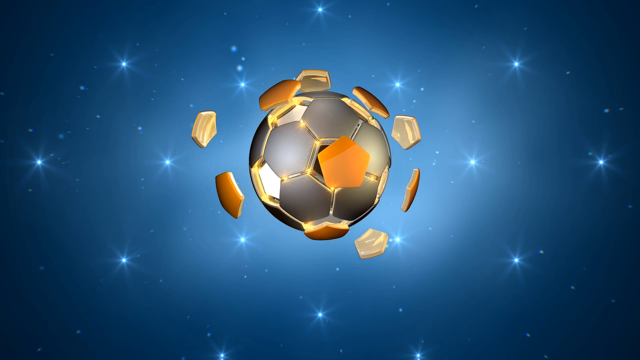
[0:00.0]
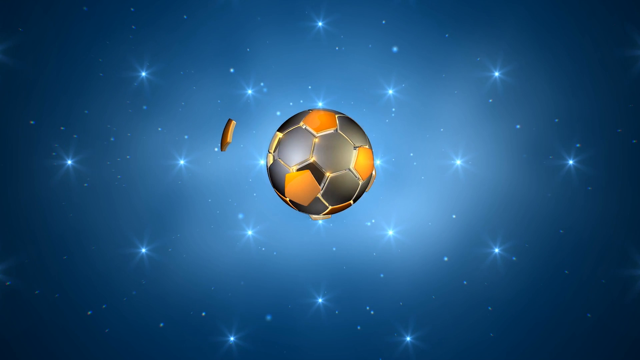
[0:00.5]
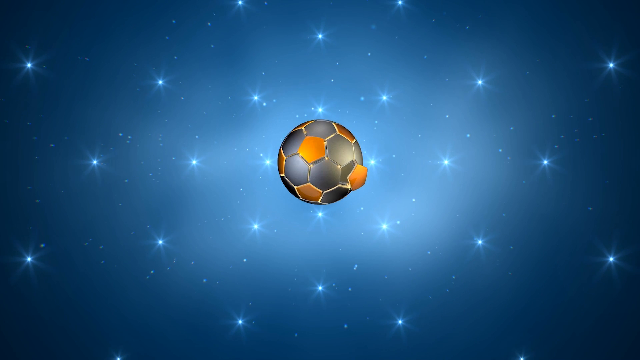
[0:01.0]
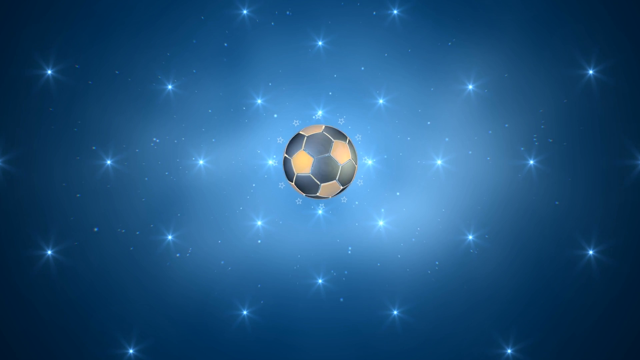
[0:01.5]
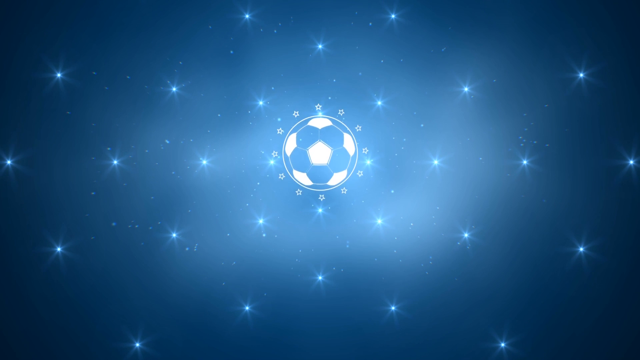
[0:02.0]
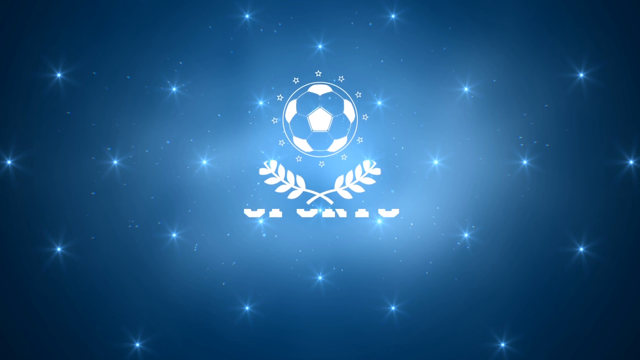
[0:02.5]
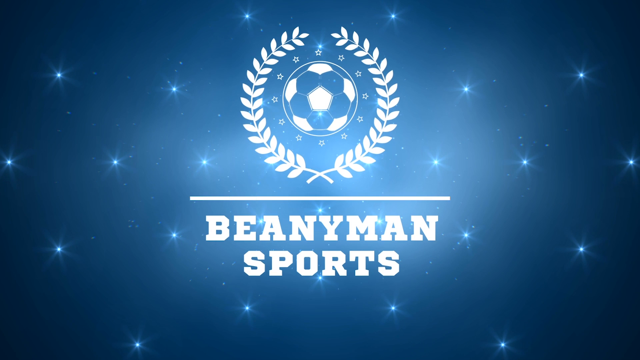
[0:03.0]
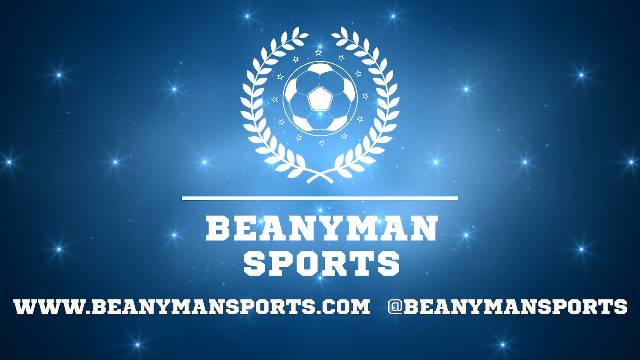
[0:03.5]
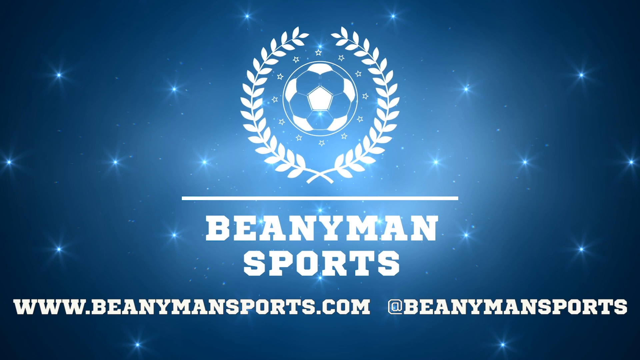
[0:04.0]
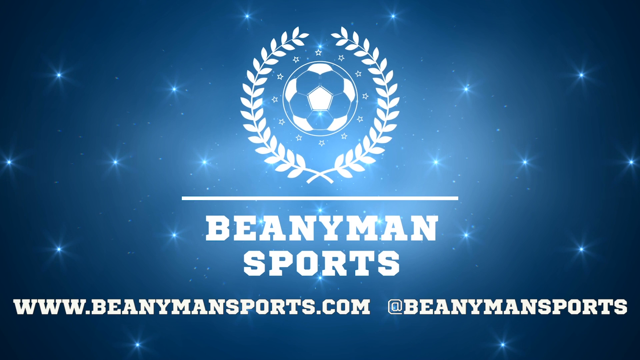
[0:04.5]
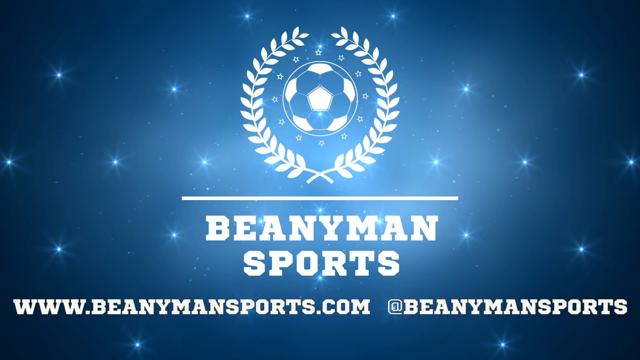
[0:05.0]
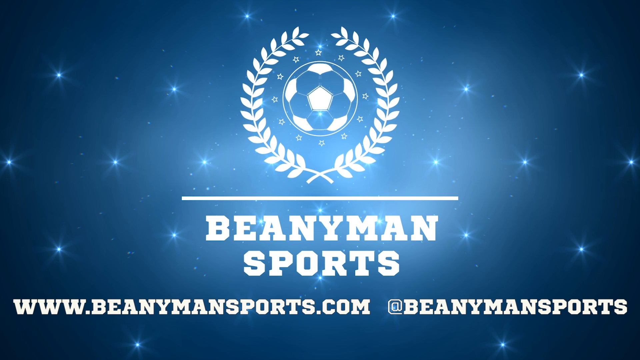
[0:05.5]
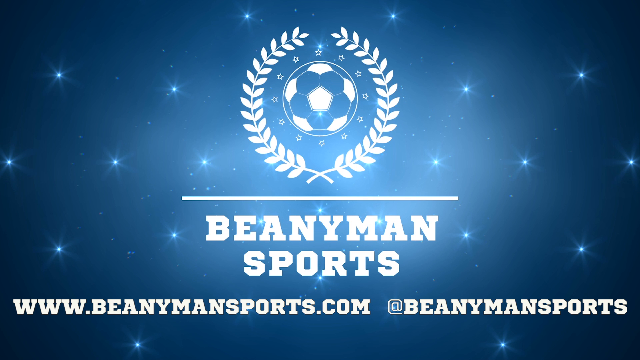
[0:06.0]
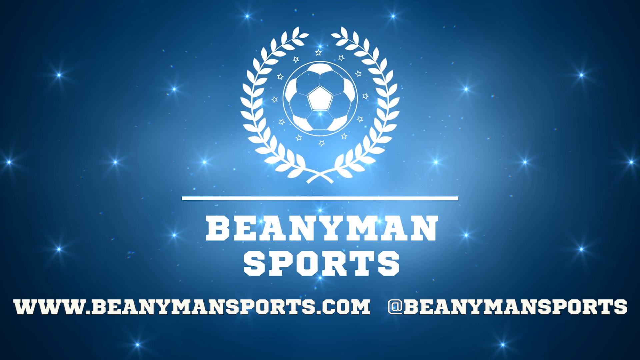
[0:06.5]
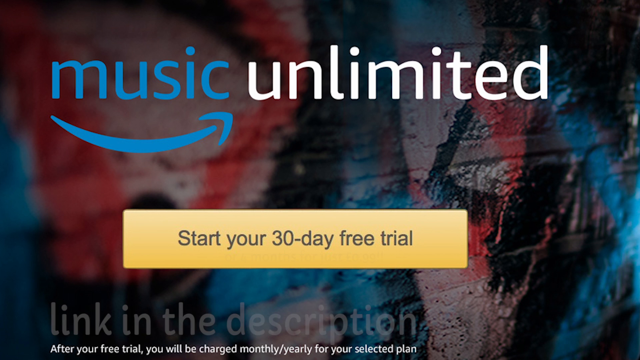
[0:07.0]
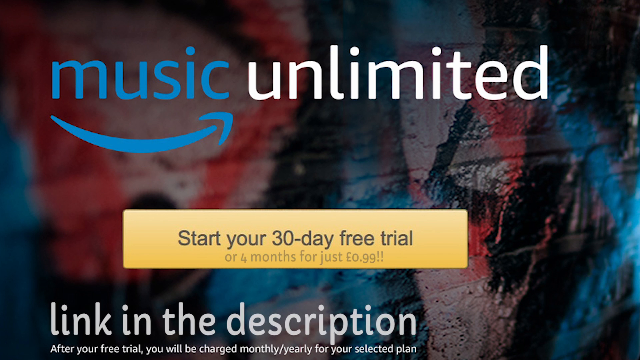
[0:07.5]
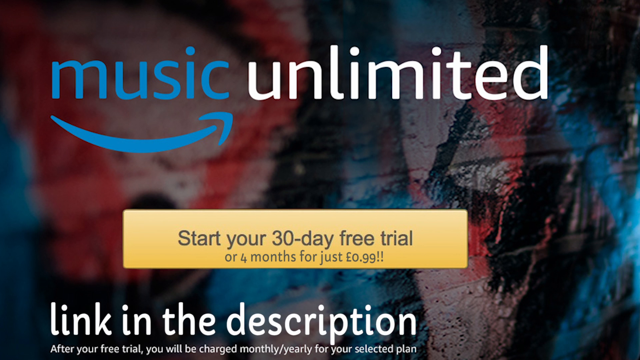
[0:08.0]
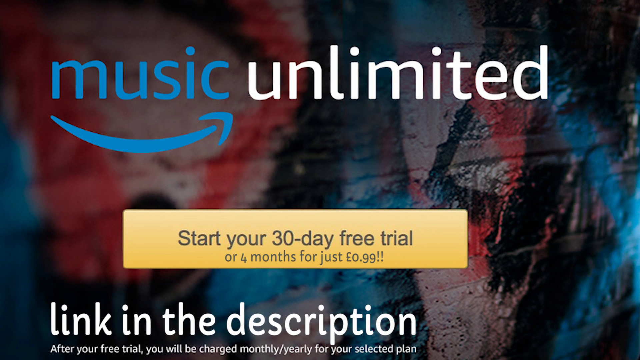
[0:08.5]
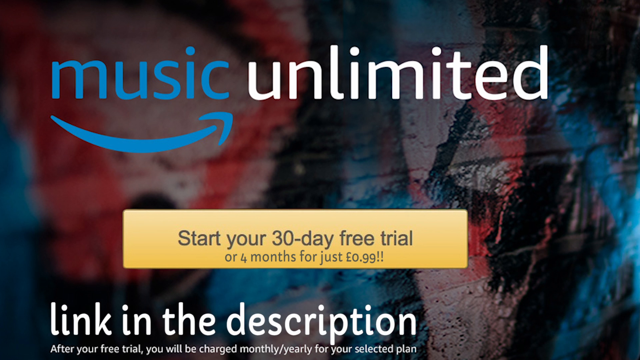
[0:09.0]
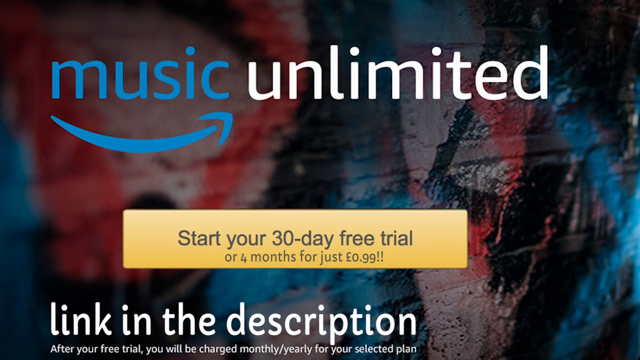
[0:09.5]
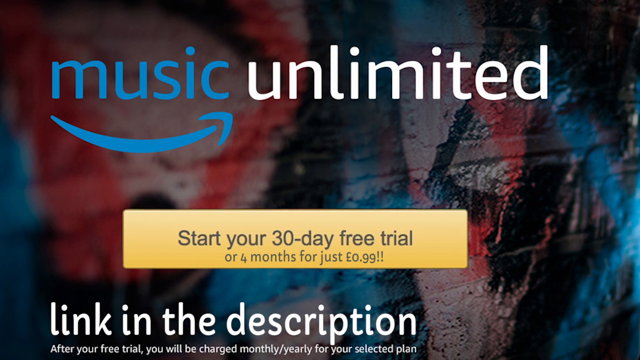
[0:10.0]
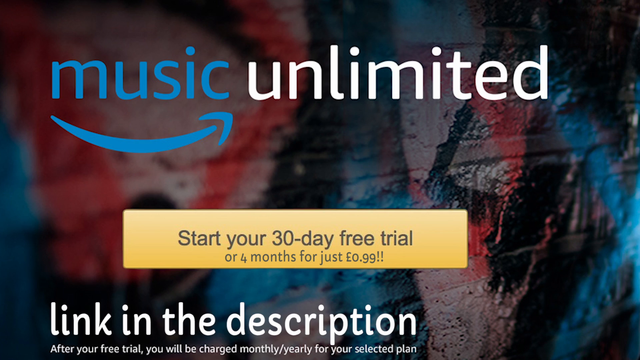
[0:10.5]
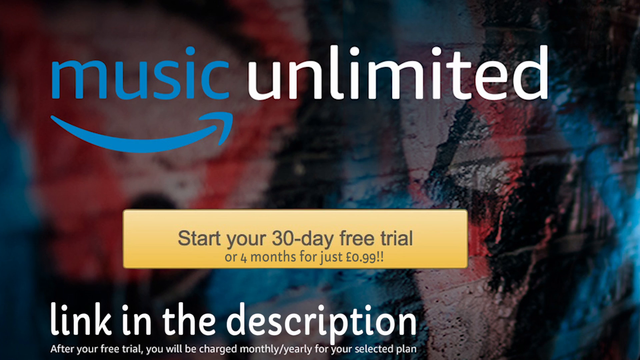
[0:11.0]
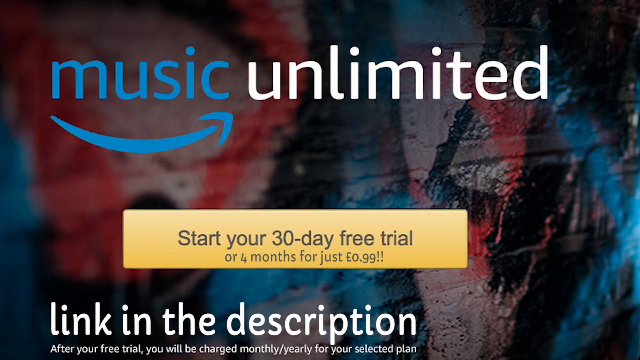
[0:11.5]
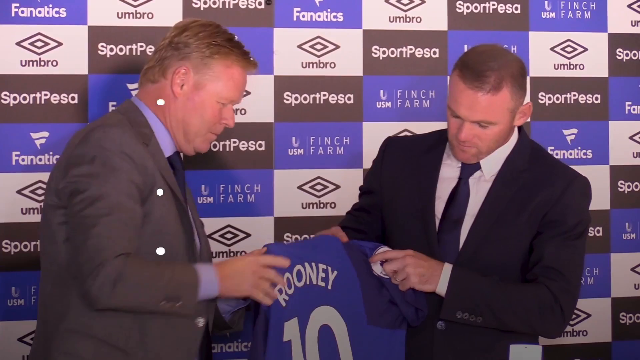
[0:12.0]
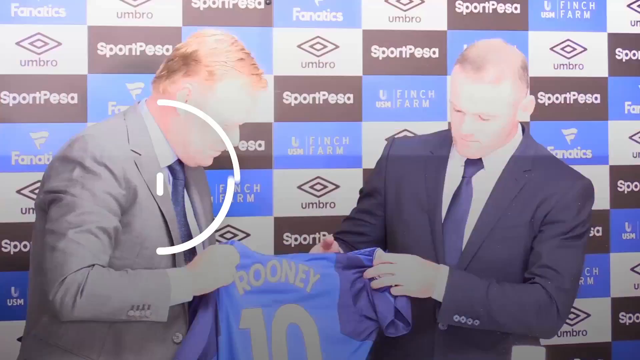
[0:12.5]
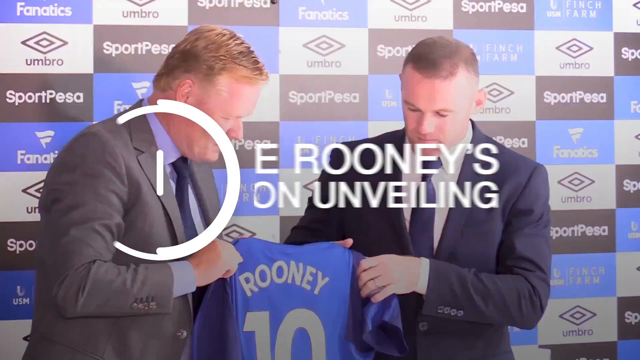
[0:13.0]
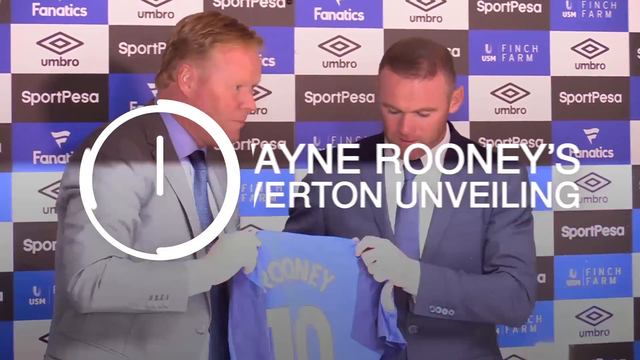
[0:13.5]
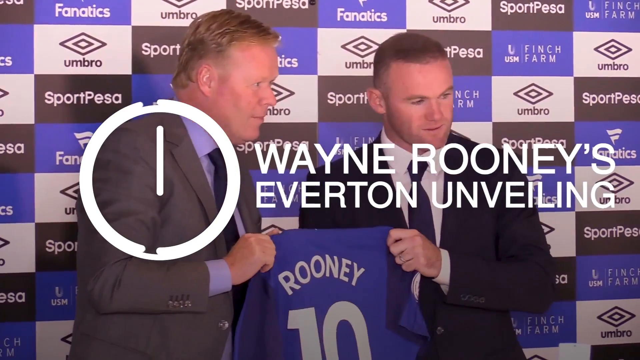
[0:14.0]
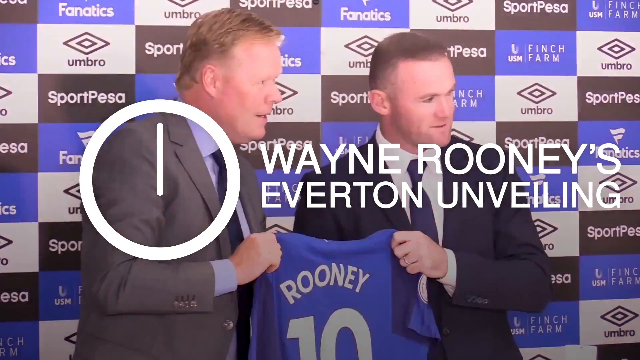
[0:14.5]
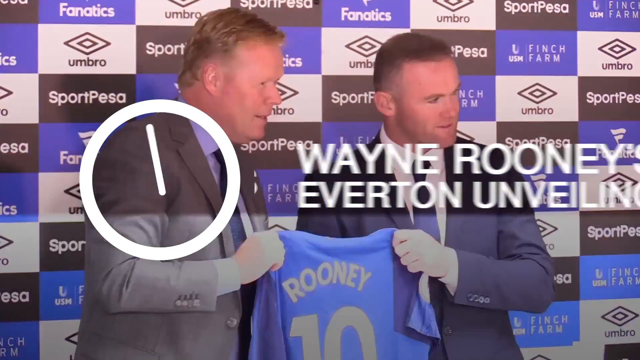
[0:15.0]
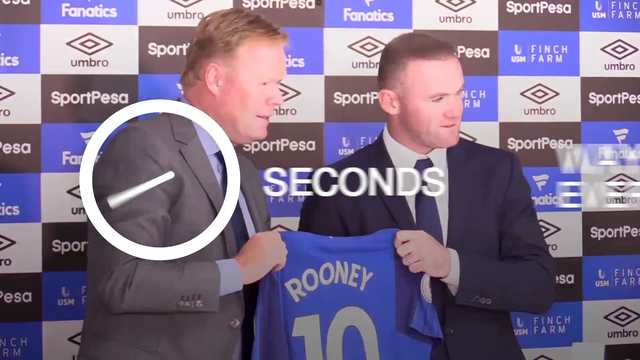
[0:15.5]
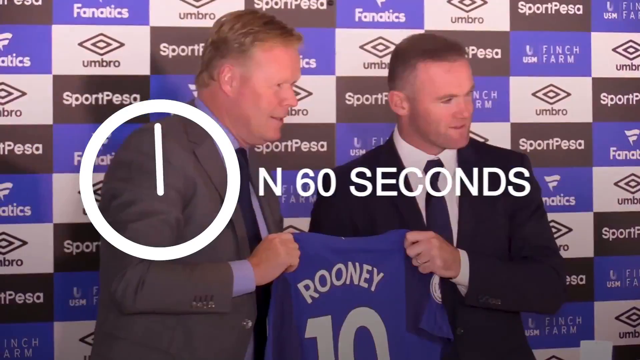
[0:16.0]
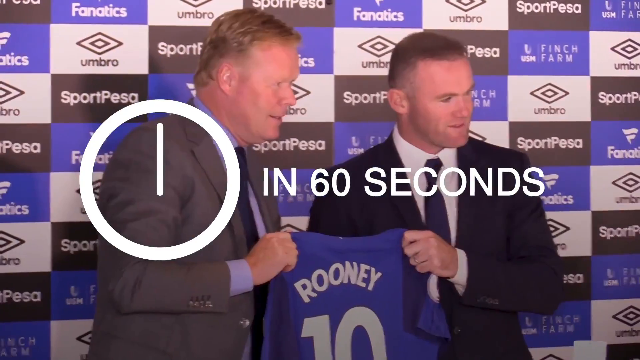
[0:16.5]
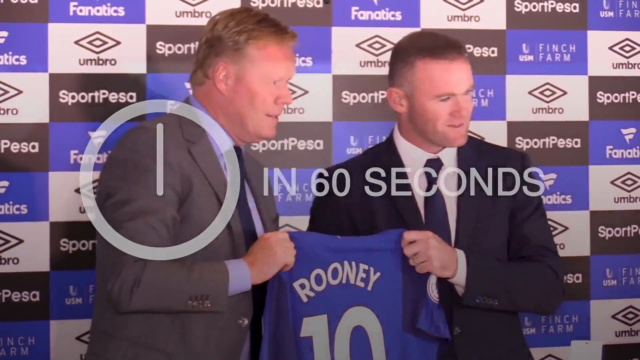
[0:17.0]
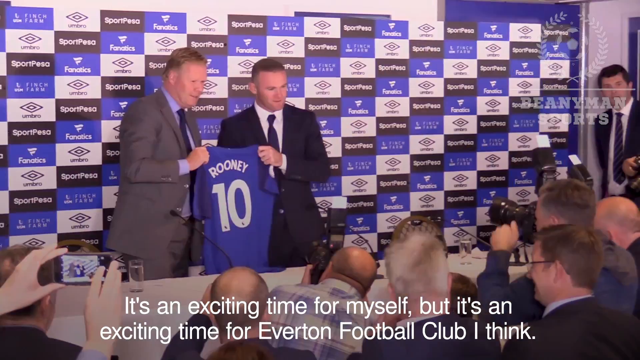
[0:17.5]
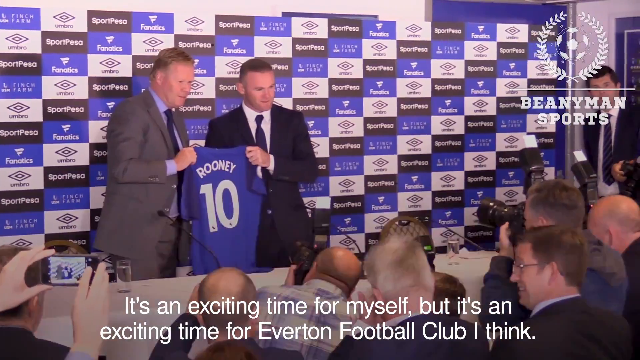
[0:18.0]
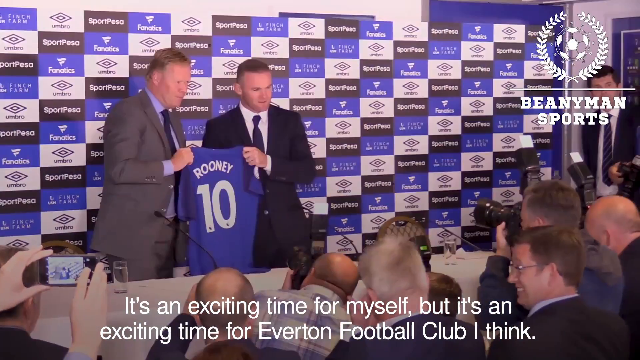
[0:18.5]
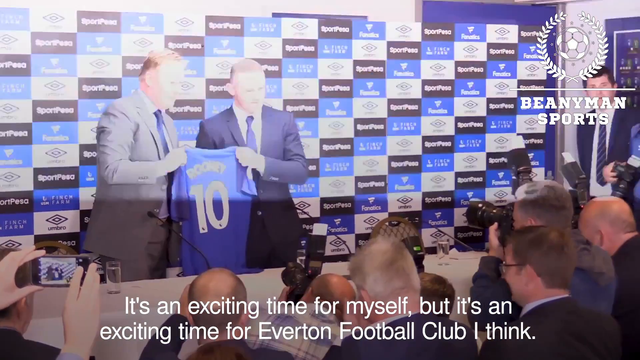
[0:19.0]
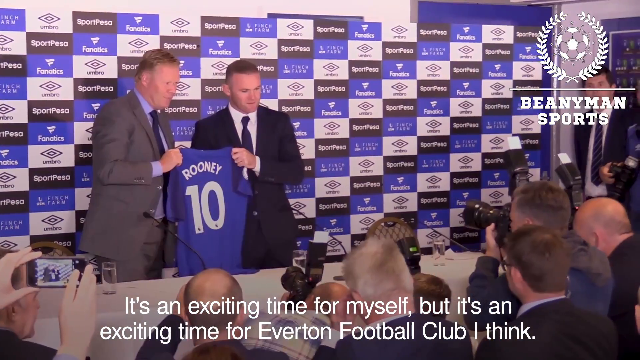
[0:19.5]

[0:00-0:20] Shiny stars appear on a blue background, and then a soccer ball appears. Pieces of a soccer ball fly in from elsewhere and attach to the ball until it is complete. The ball then gets smaller and smaller and fades into the background, and "Binniemansports.com" appears, along with an icon of two leaves surrounding the ball. An ad for Amazon Music Unlimited follows, reading "Start your 30 days free trial or 4 months for just $0.99," with a link in the description. Next, two men hold up a Ronnie shirt together; one of them is apparently the soccer player Ronnie. The number 10 is on the blue shirt.